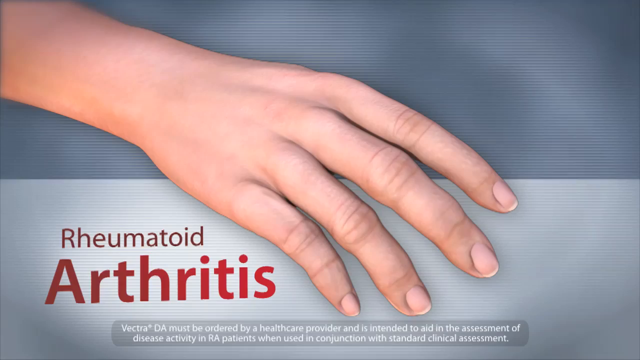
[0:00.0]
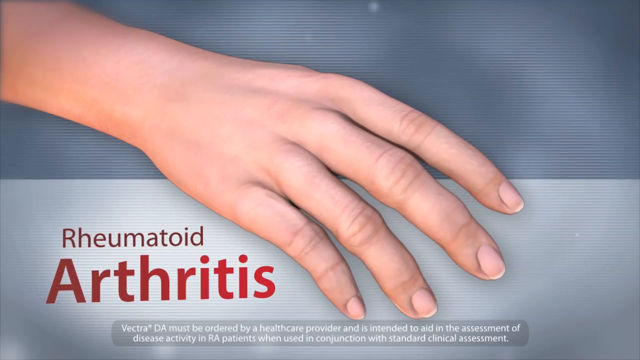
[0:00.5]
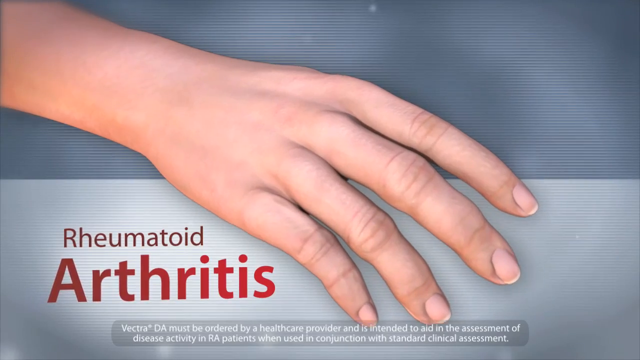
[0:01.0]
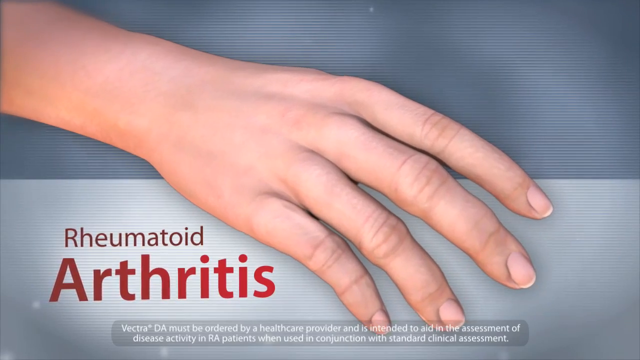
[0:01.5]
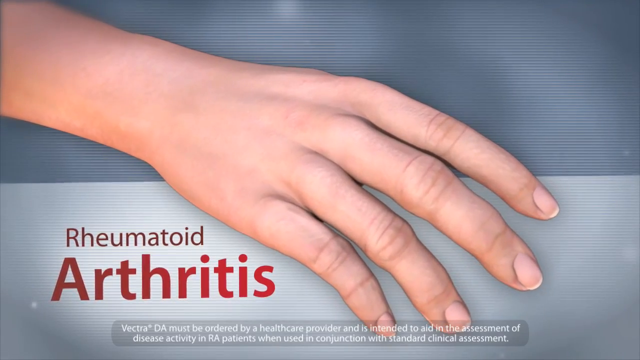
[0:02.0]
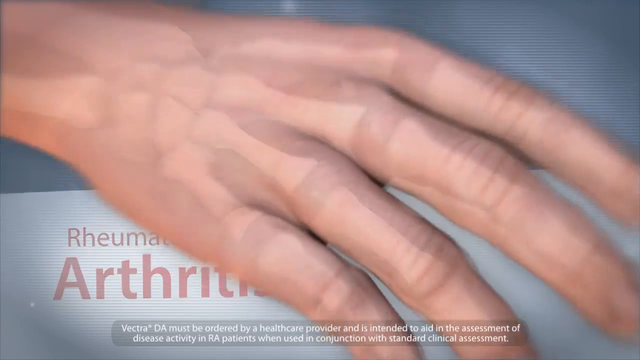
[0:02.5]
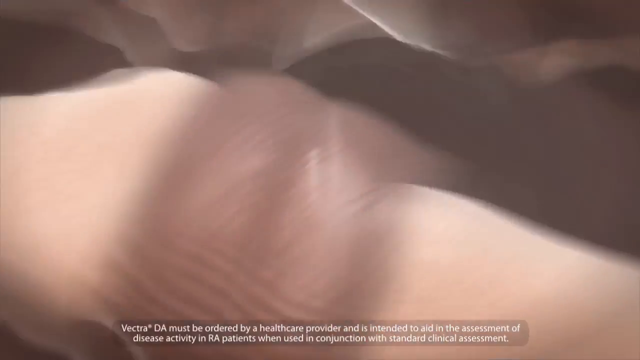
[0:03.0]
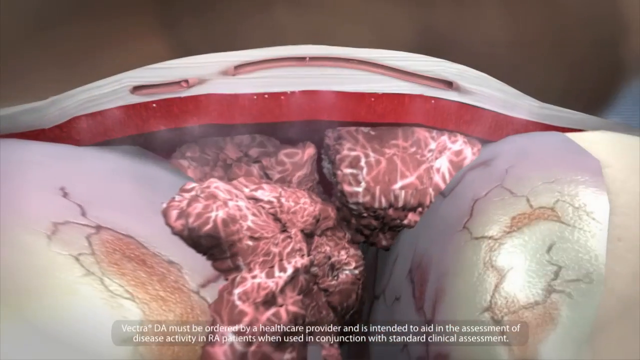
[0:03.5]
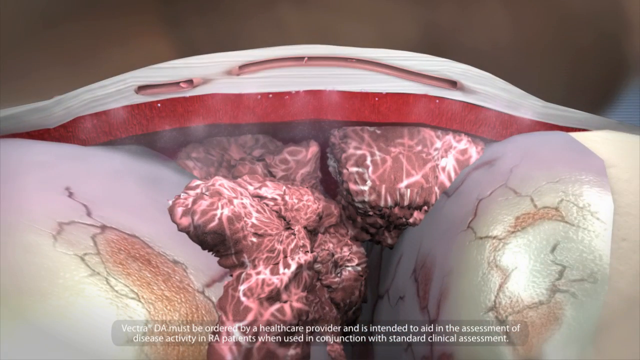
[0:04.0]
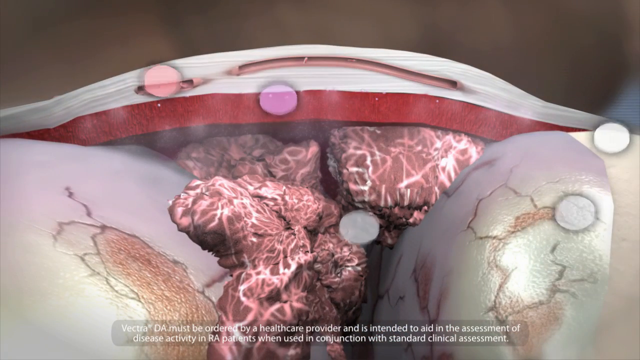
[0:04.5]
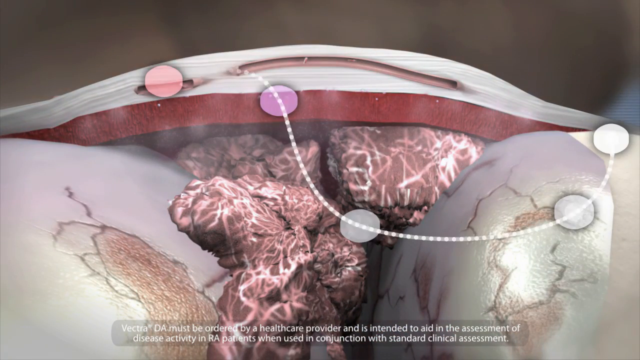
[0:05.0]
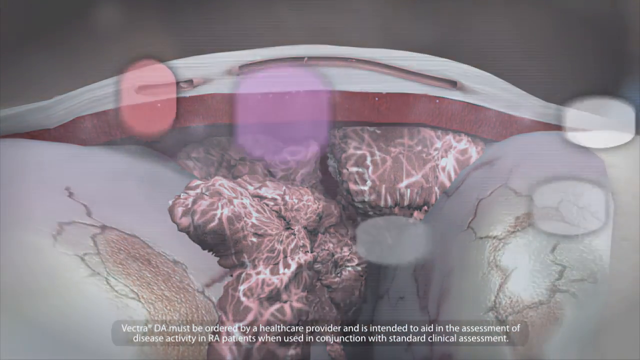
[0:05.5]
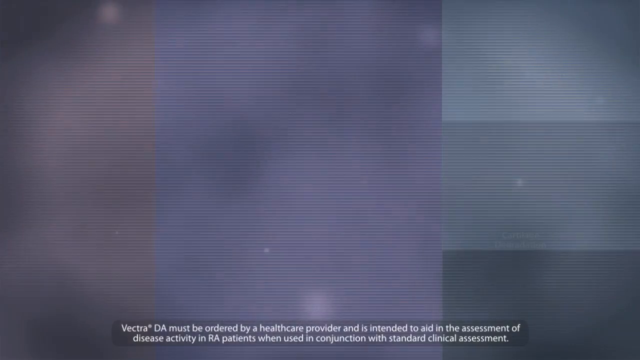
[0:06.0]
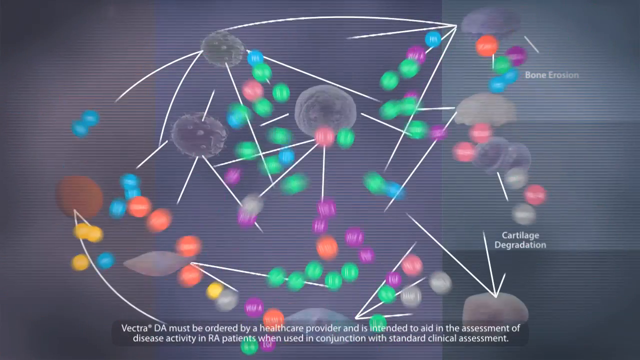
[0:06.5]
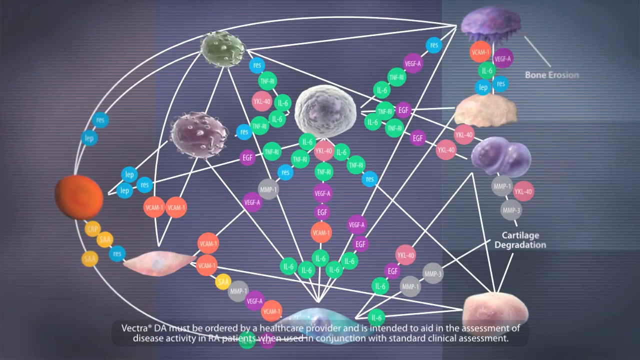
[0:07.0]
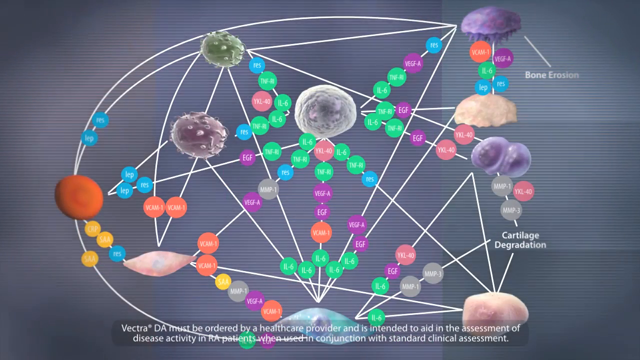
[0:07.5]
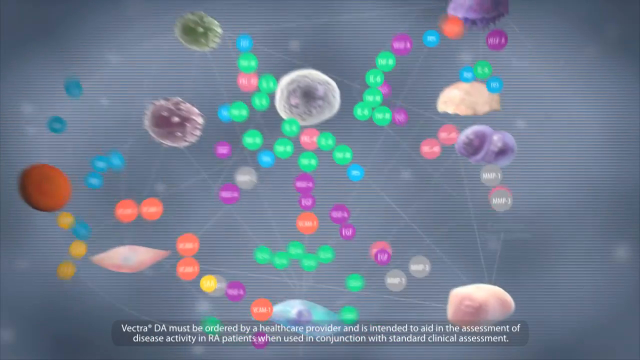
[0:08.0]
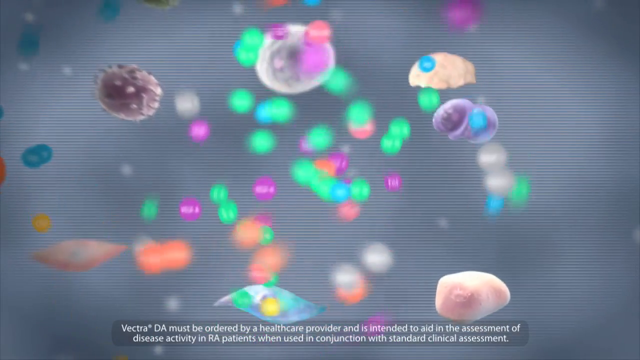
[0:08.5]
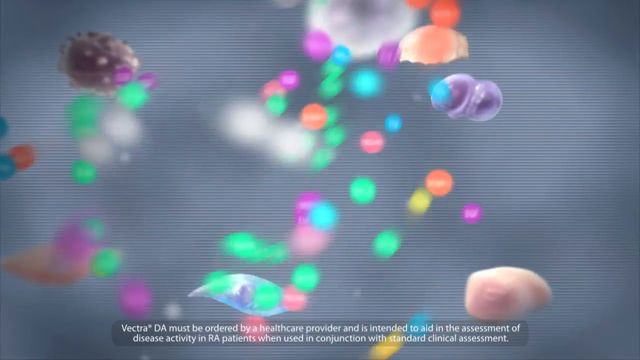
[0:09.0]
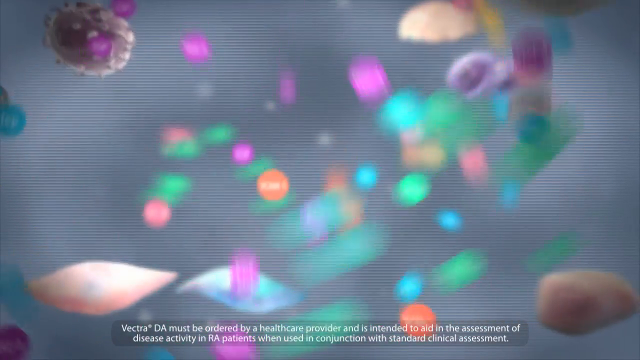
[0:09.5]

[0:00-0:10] An animation shows a hand. Red text reads "rheumatoid arthritis," and a gray banner with white text reads "Vectra DA must be ordered by a healthcare provider and is intended to aid in the assessment of disease activity in RA patients when used in conjunction with standard clinical assessment." The camera moves in on the hands and zooms all the way into the bone and muscle, revealing a lot of red tissue and some little multicolored circles with a line connecting all of them. The circles enlarge and go full screen, followed by many other circles in different colors such as blue, yellow, purple, orange, green and gray. Other little circles, kind of like rock shapes, appear in orange, green, purple, gray and other colors. They are labeled "bone erosion" and "cartilage degradation," and appear to be numbered, and they kind of rearrange themselves.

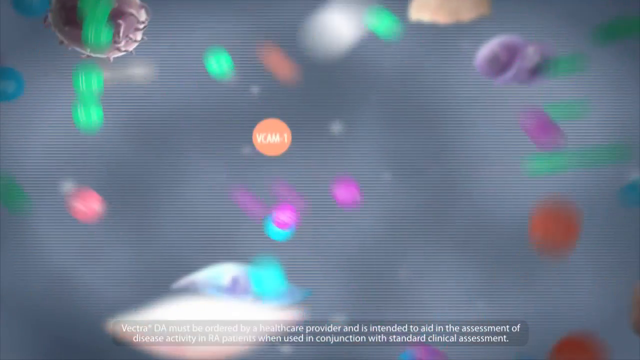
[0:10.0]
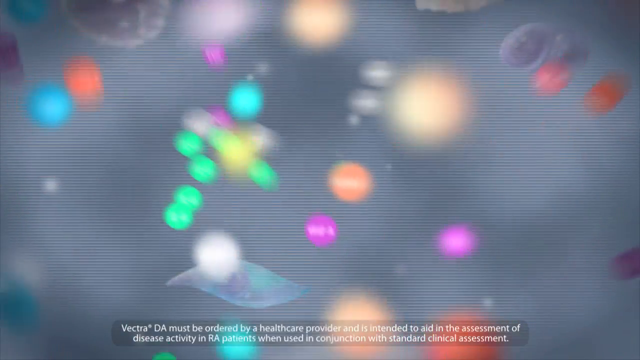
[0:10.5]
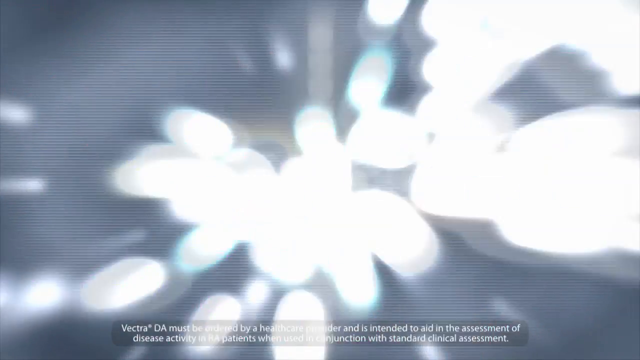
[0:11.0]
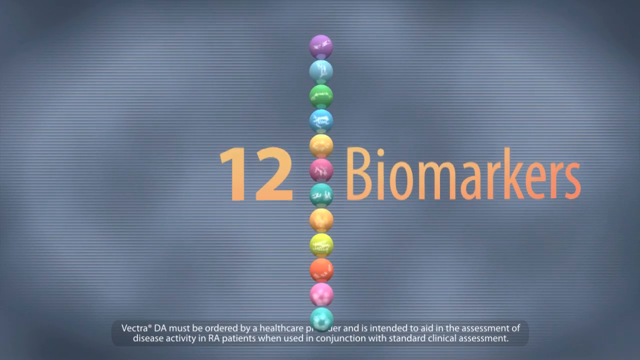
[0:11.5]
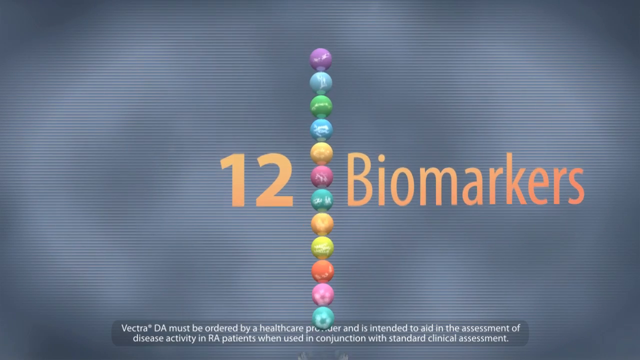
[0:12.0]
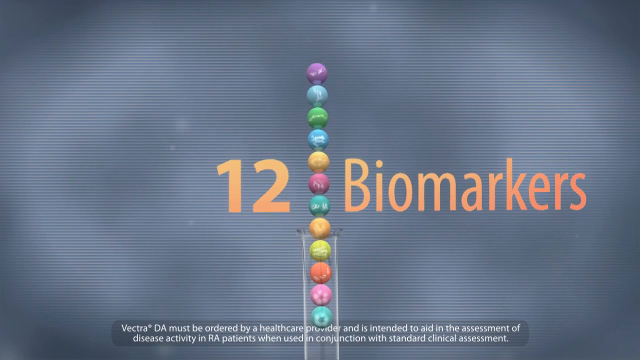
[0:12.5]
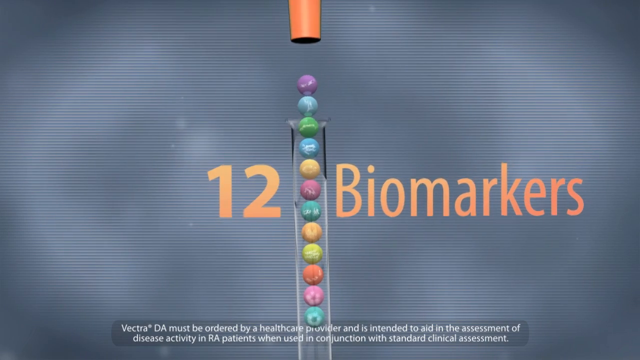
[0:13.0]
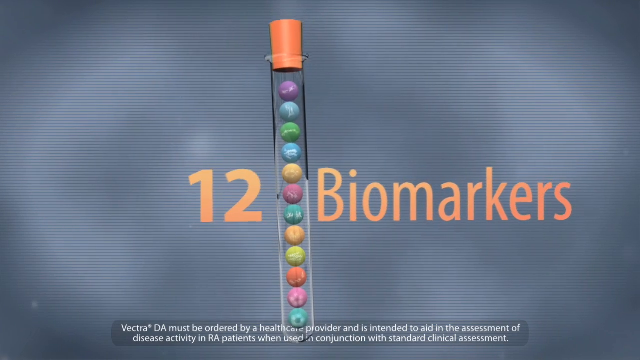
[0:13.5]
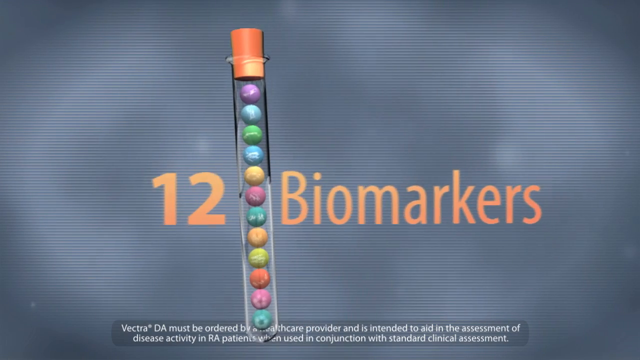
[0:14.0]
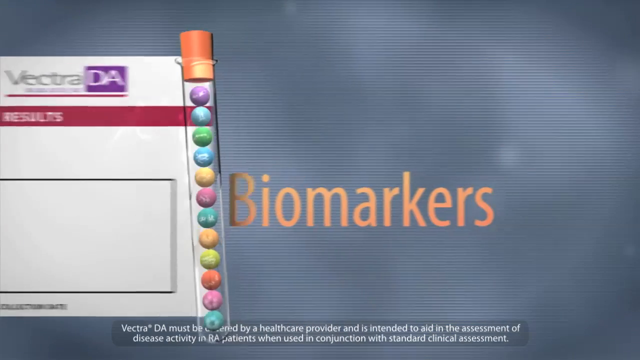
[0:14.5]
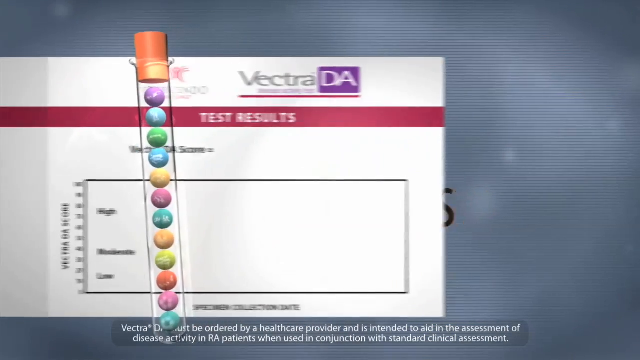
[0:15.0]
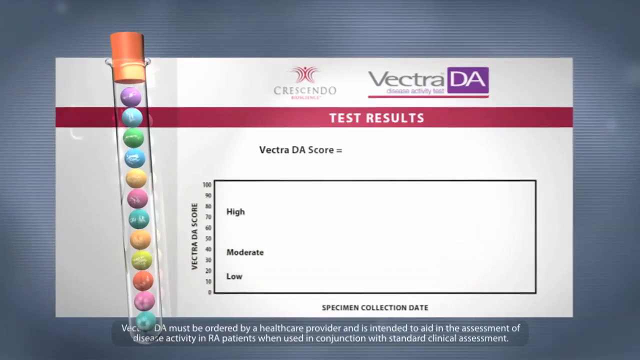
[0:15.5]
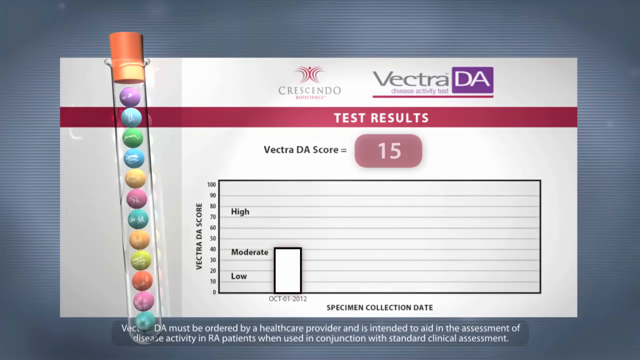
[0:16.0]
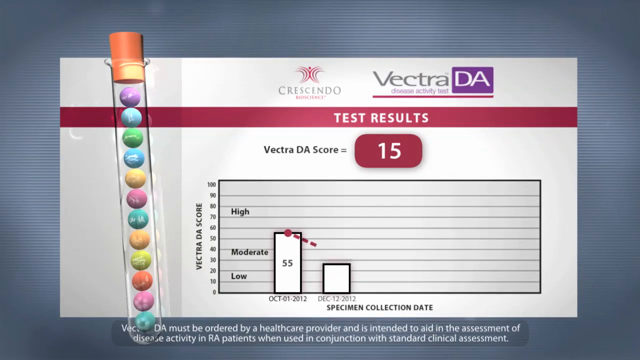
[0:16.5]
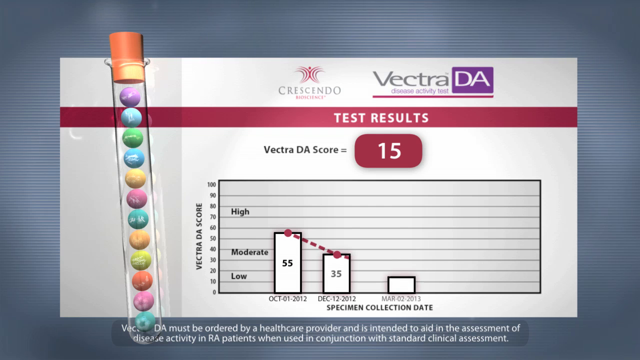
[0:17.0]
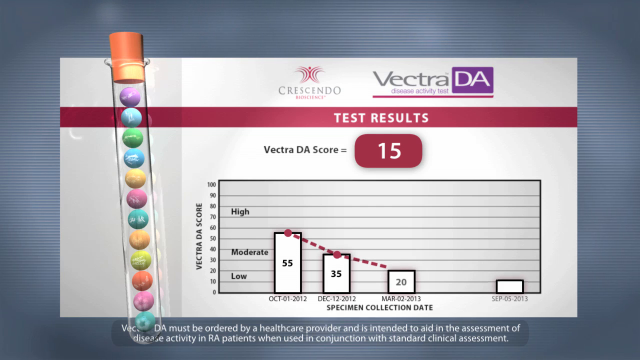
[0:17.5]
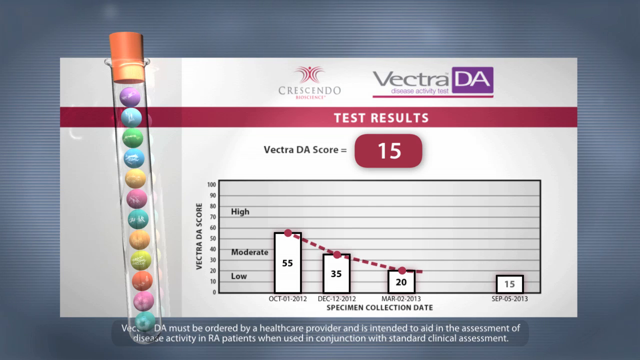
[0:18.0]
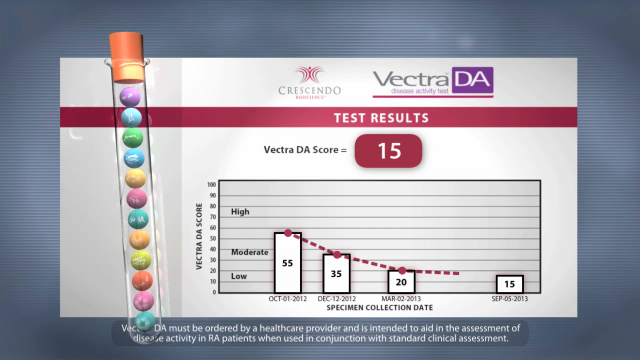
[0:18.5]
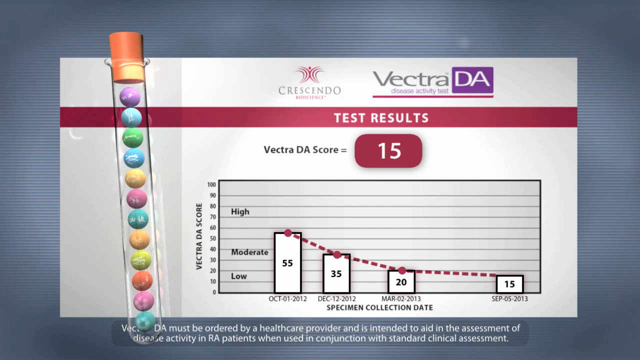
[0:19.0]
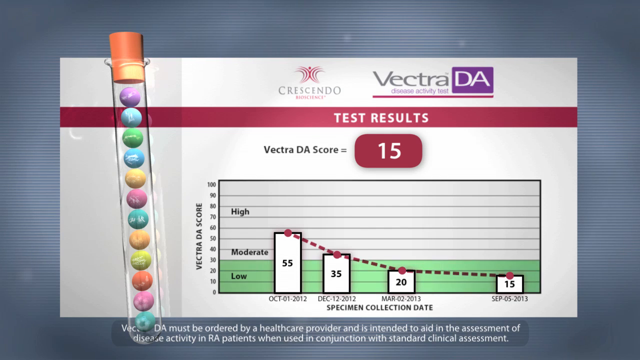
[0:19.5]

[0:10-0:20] In an animation, many little circle shapes in colors such as green, purple, blue, pink and orange swirl across the screen; one appears to say "VCAM." They all come together into orange text reading "12 biomarkers," alongside what look like stacked M&Ms in purple, blue, green, yellow, orange, pink and other colors. A gray banner box at the bottom reads "Vectra DA must be ordered by a healthcare provider and is intended to aid in the assessment of disease activity in RA patients when used in conjunction with standard clinical assessment." A kind of tube goes over some of the little multicolored circle objects, and an orange tube connects to the glass. A green pop-up appears reading "Vectra DA test results crescendo, Vectra DA score 15," with a graph labeled "Vectra DA score" showing high, moderate and low. It shows 55 on October 1st, 2012; 35 on December 12th, 2012; 20 on March 2nd, 2013; and 15 on September 5th, 2013. A box comes up green and then goes to a yellow color.